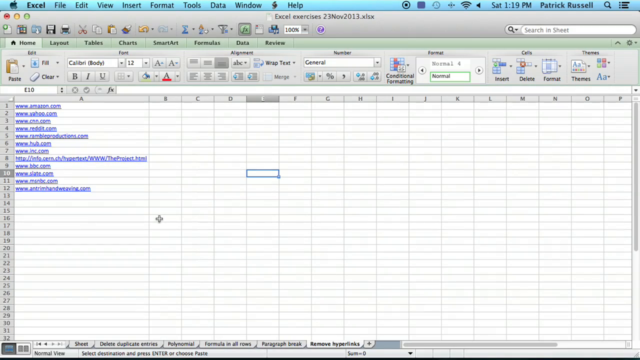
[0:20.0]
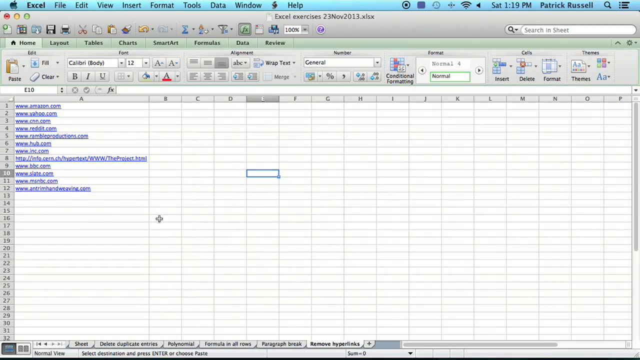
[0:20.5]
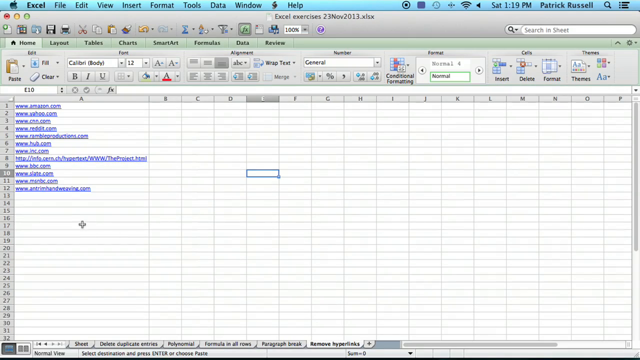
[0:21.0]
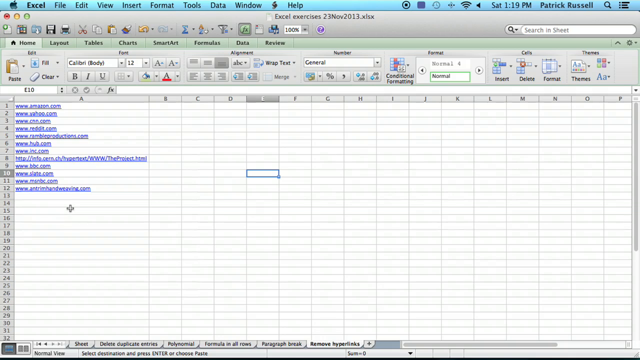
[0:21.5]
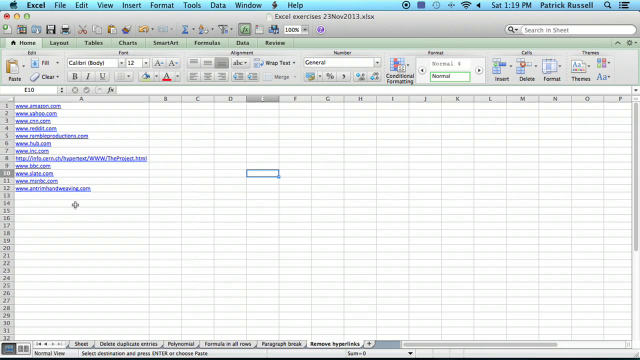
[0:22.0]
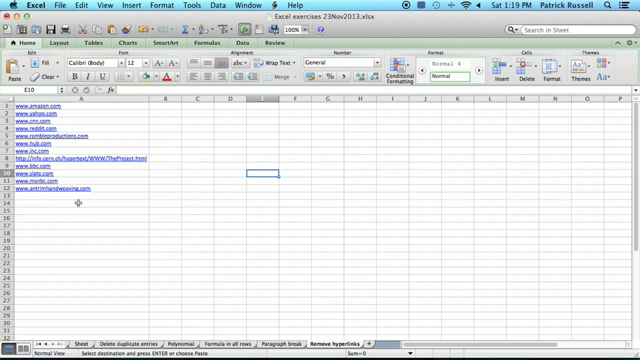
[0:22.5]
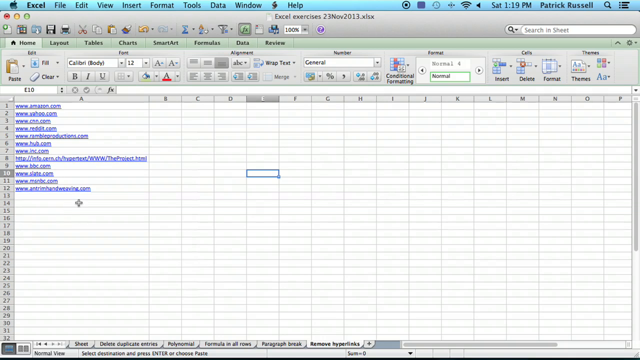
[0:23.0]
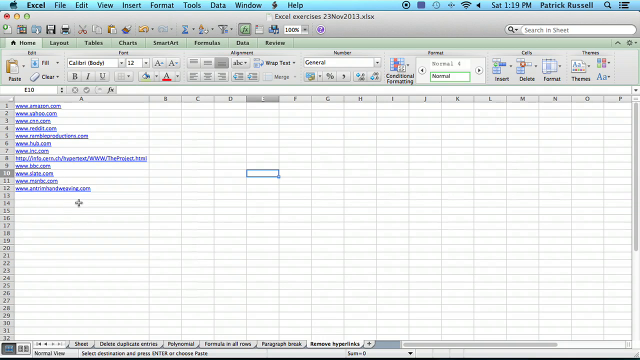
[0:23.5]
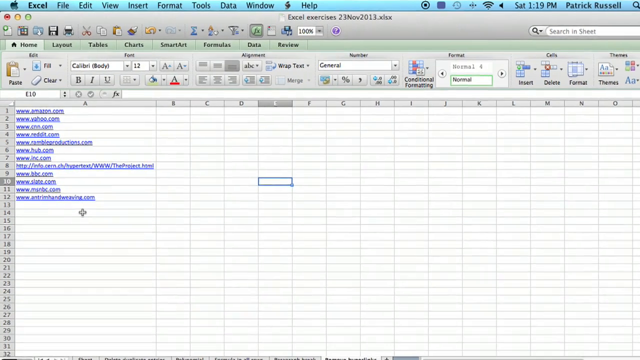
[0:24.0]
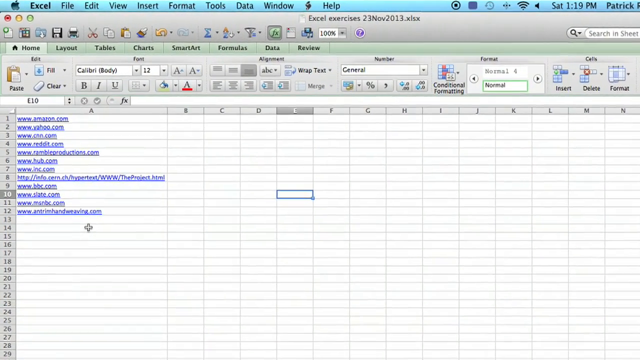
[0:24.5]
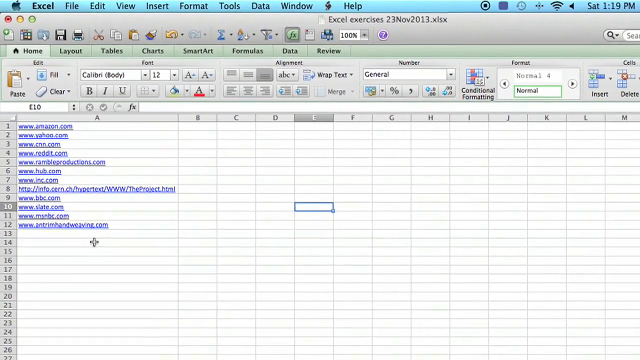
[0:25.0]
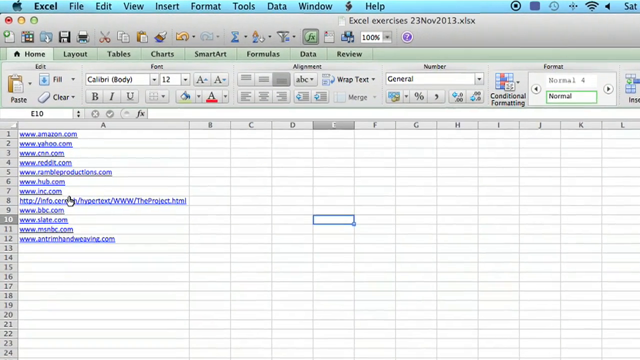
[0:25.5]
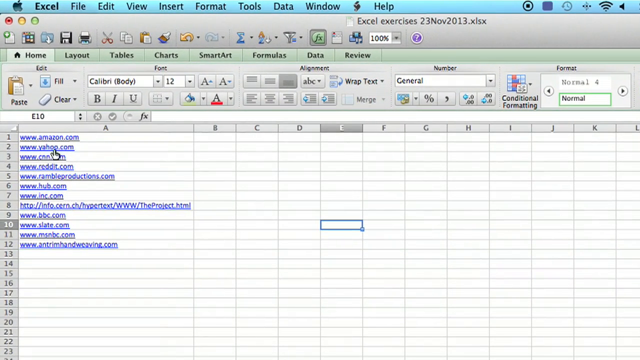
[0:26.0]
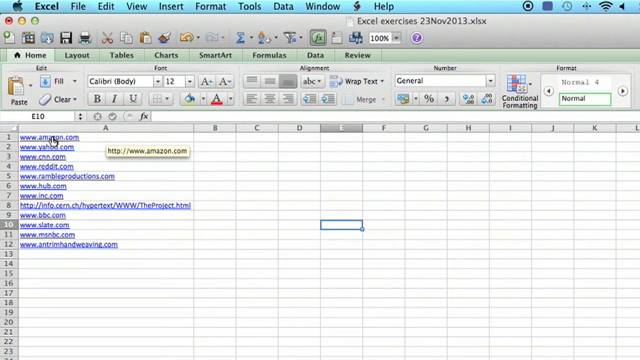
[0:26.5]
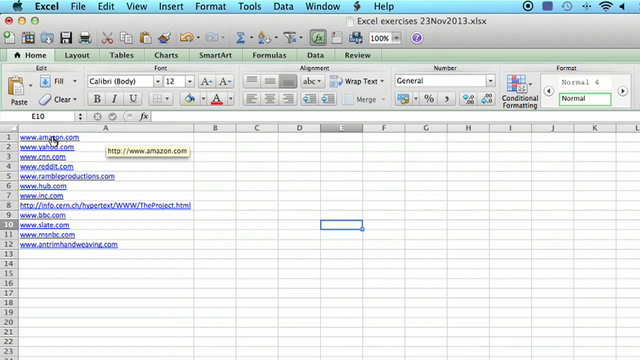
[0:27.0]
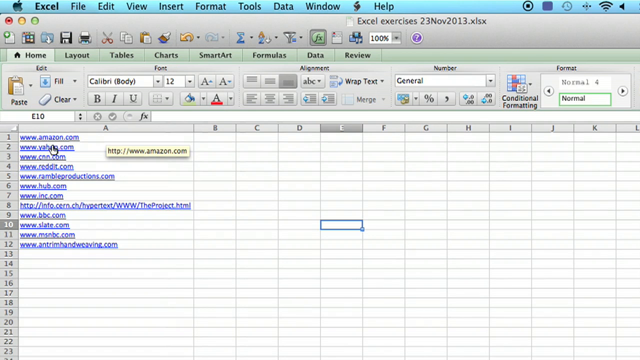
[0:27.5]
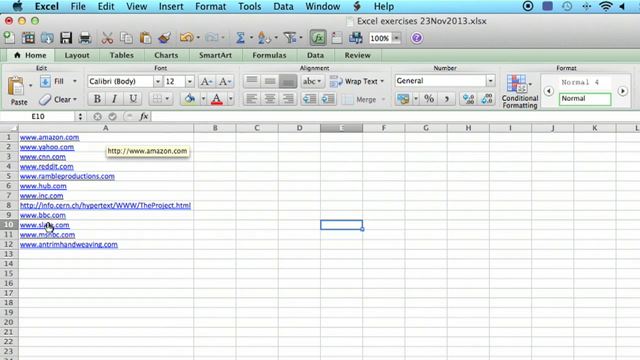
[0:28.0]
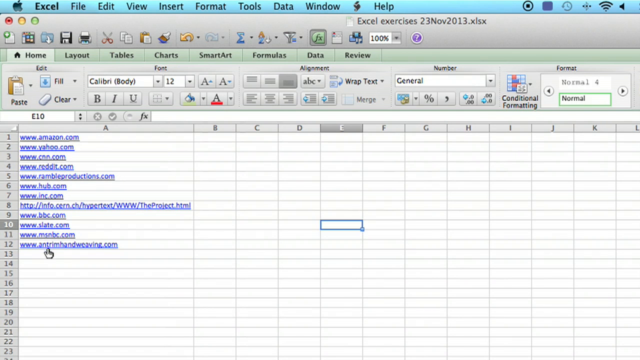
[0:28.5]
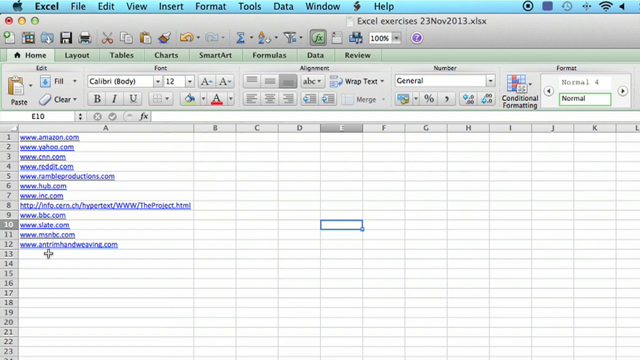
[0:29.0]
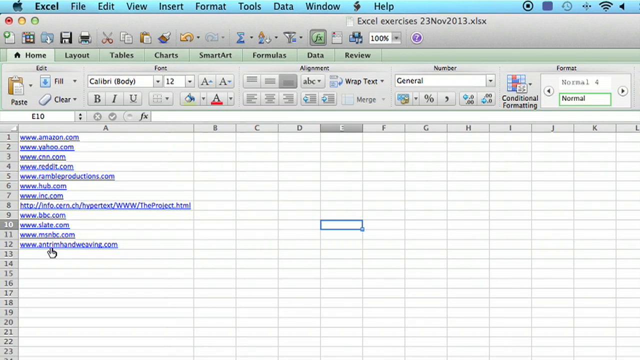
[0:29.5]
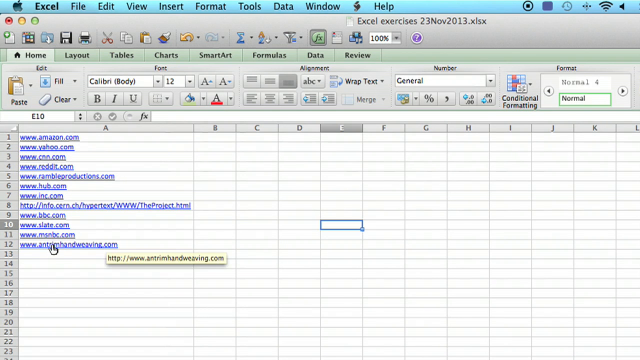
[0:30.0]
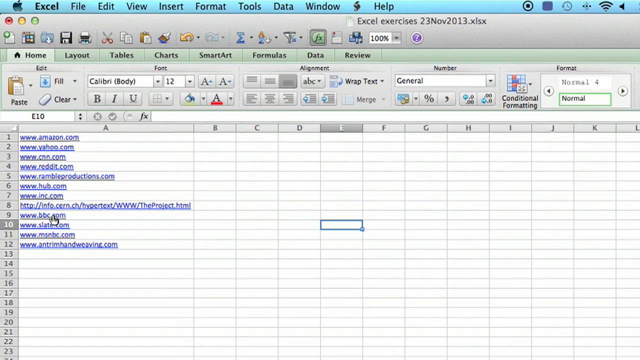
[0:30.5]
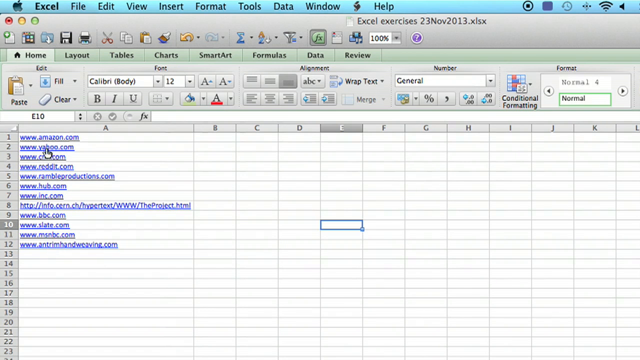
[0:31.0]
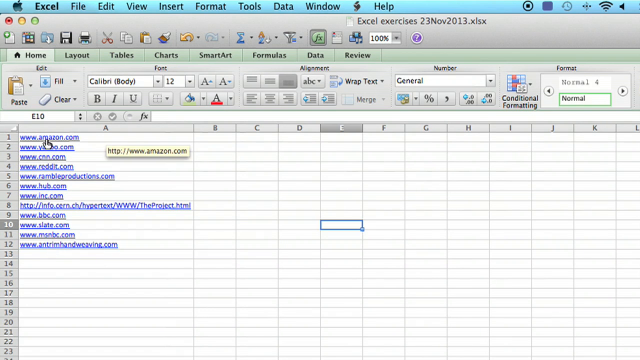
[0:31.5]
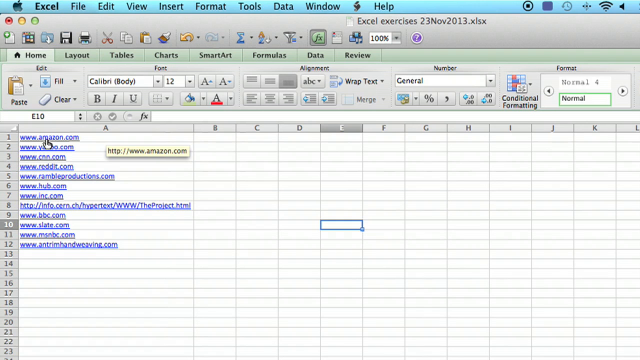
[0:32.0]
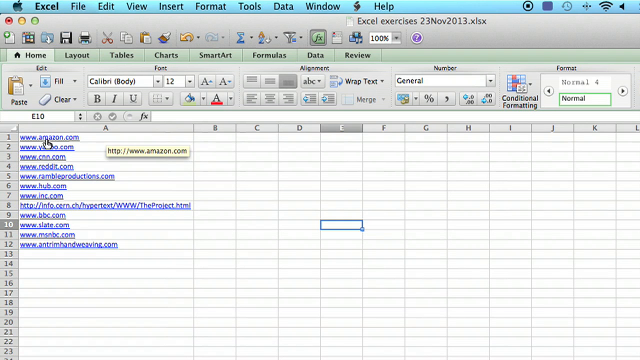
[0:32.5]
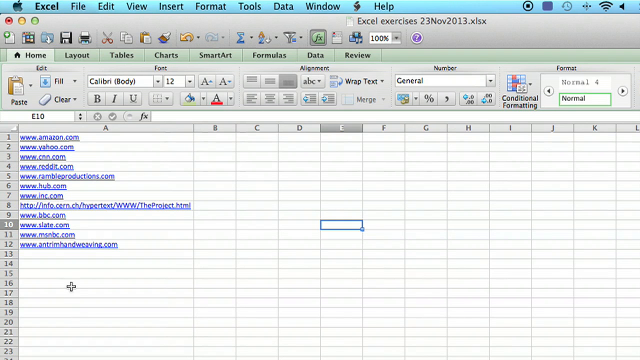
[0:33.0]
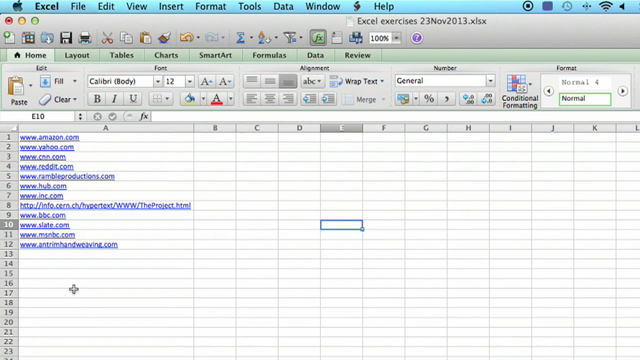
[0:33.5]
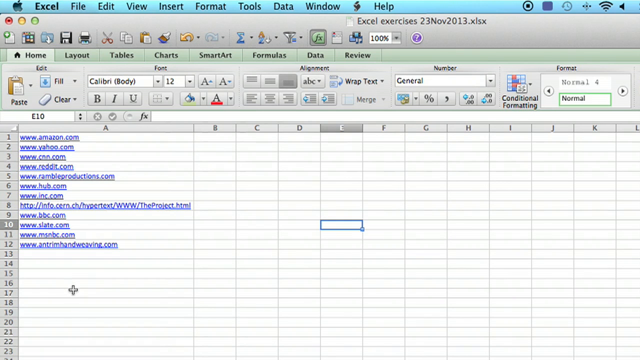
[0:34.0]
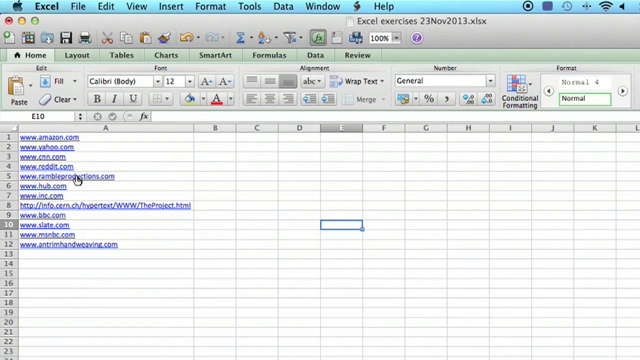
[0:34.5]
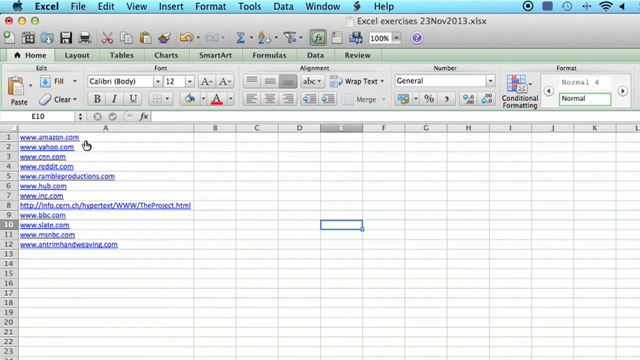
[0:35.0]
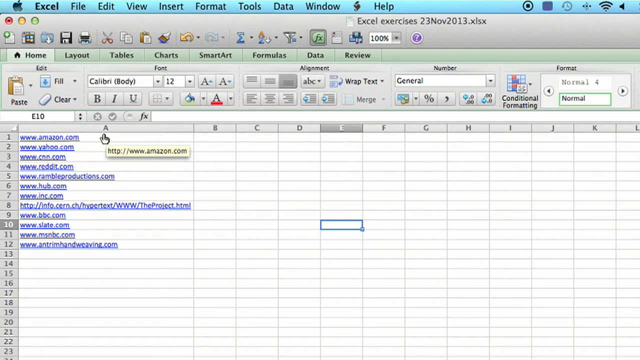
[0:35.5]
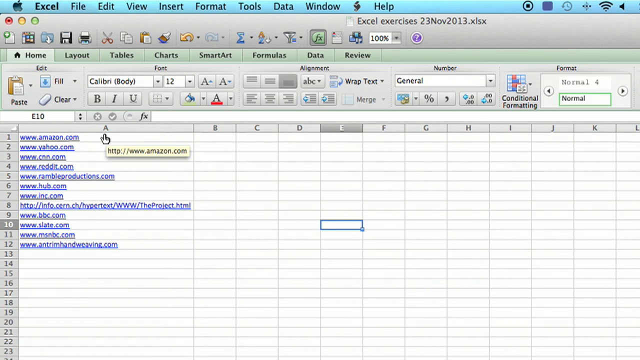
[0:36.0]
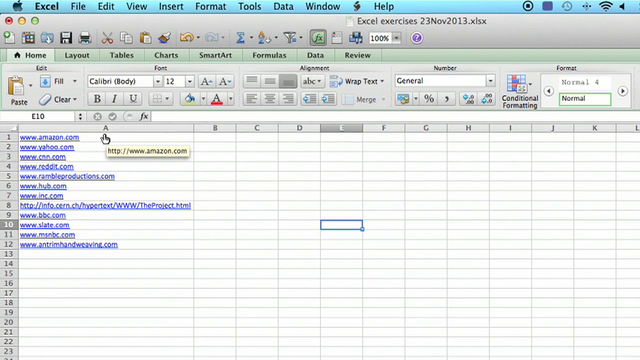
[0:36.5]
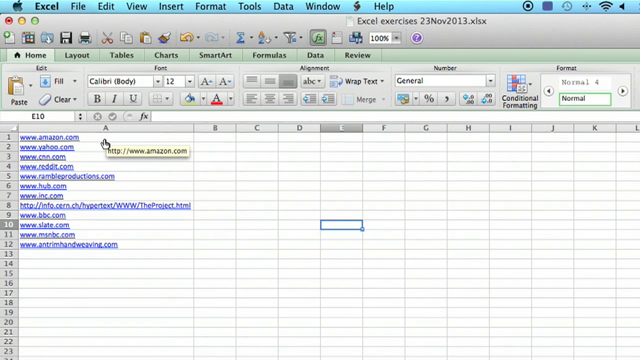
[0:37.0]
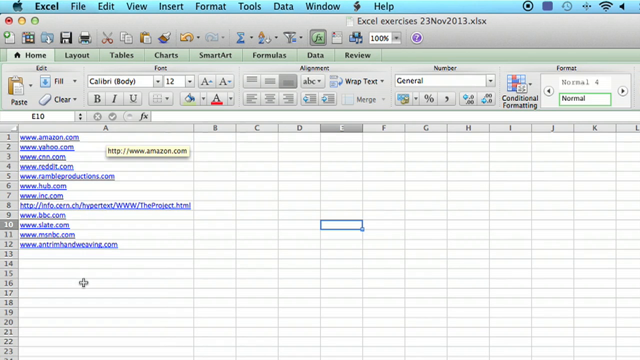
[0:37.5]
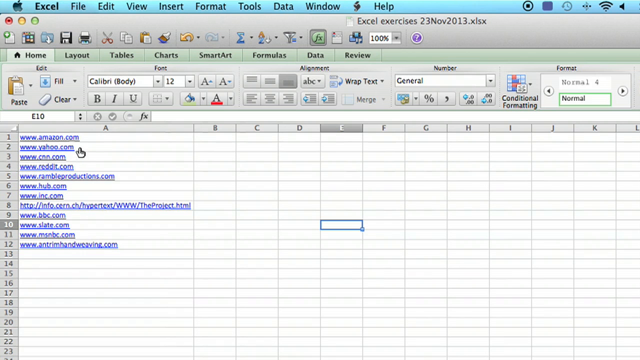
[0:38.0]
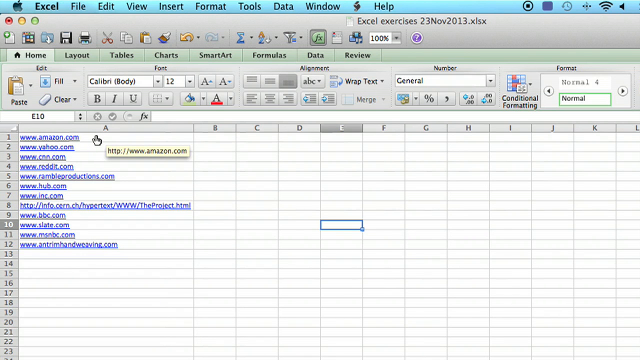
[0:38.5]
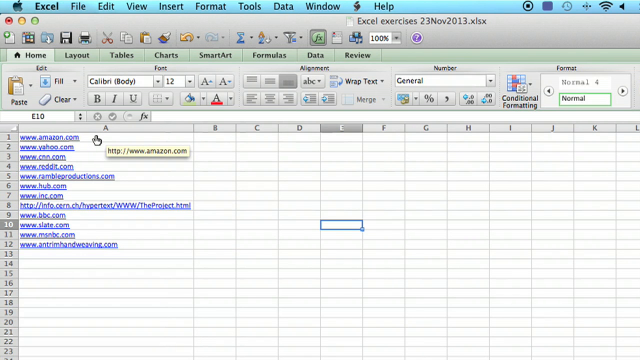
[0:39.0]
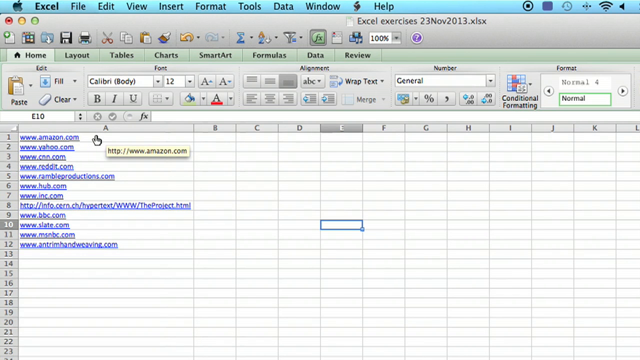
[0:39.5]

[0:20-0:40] A spreadsheet made by Patrick Russell is on screen, and text at the top shows Saturday at 1:19 p.m. The spreadsheet has 12 lines containing web addresses and URLs, all highlighted in purple, and the background at the top of the window is a light teal blue. The author quickly moves over and goes through the web addresses, zooming in on them and pointing at them.